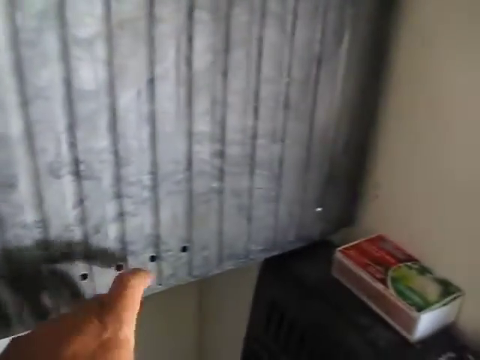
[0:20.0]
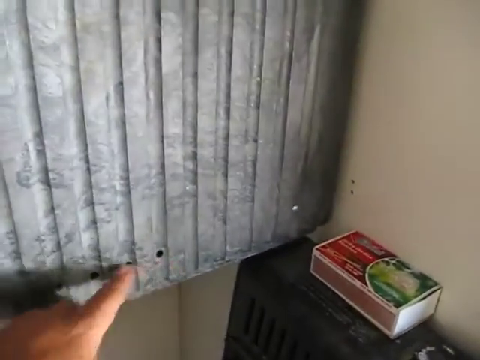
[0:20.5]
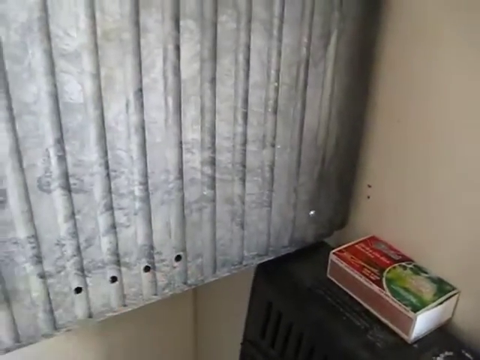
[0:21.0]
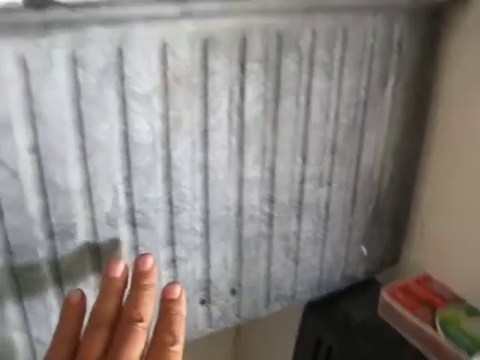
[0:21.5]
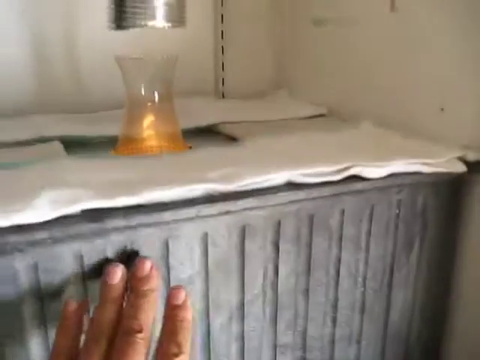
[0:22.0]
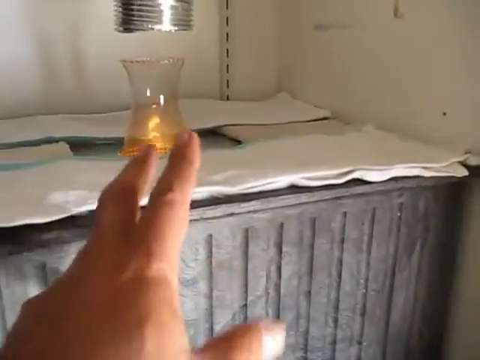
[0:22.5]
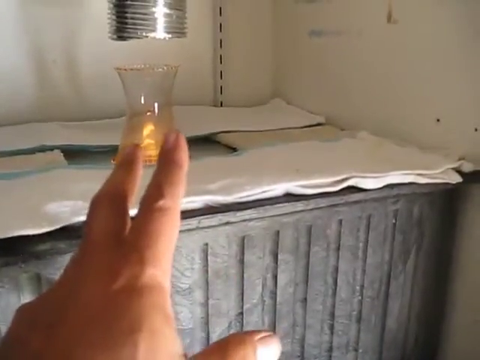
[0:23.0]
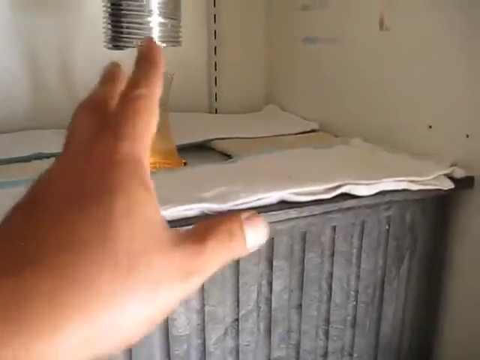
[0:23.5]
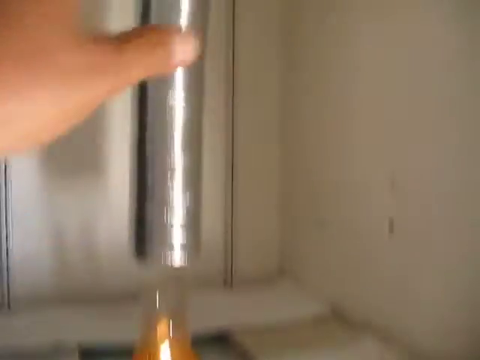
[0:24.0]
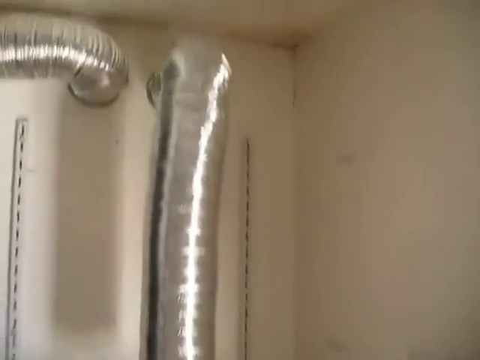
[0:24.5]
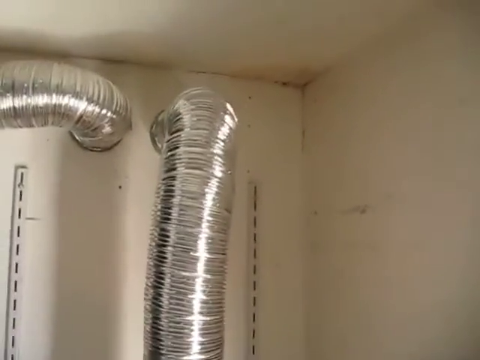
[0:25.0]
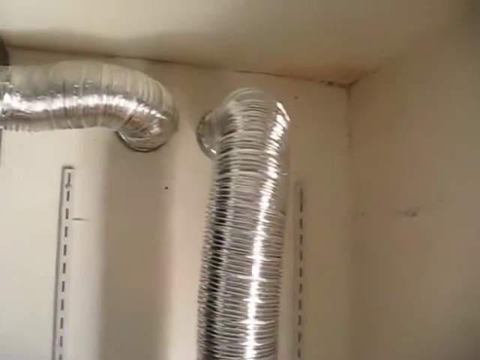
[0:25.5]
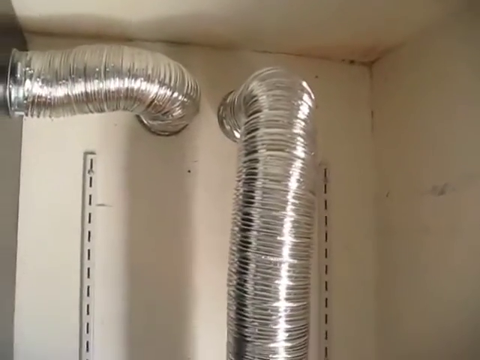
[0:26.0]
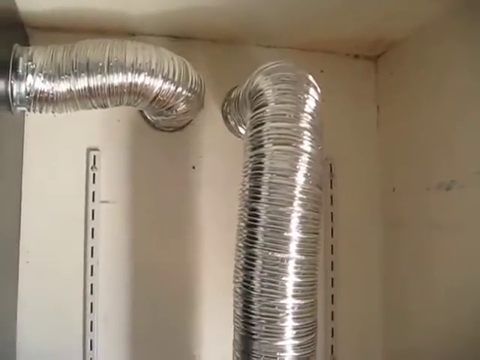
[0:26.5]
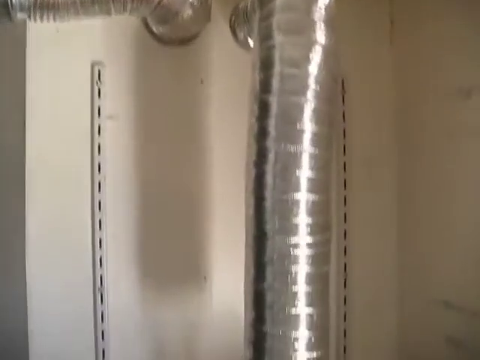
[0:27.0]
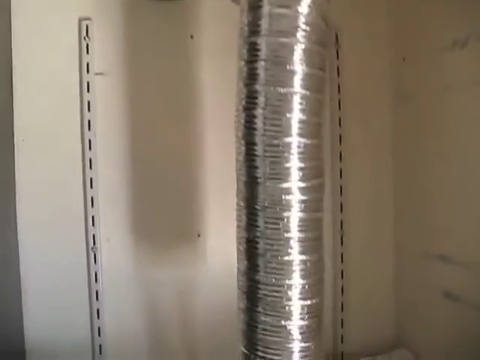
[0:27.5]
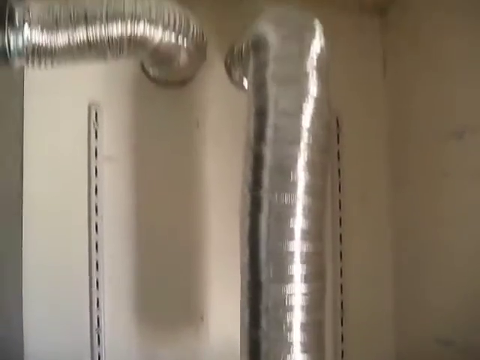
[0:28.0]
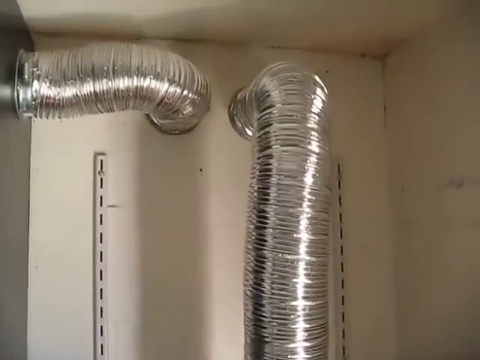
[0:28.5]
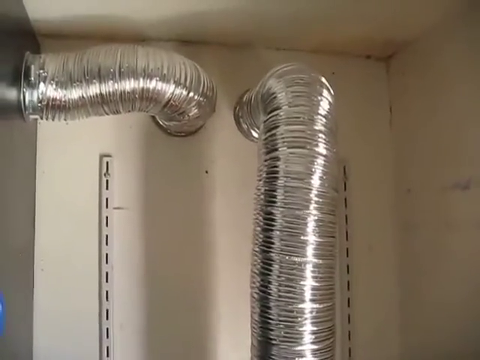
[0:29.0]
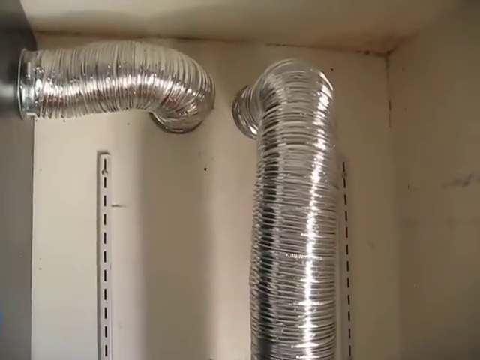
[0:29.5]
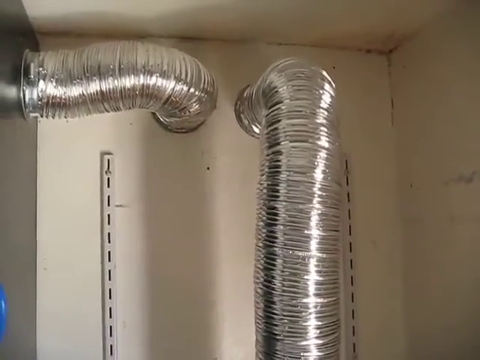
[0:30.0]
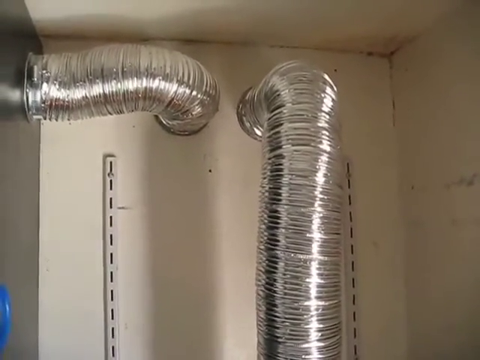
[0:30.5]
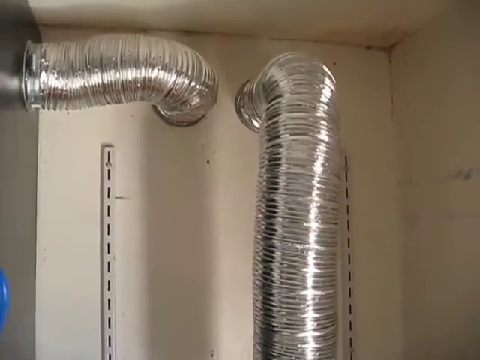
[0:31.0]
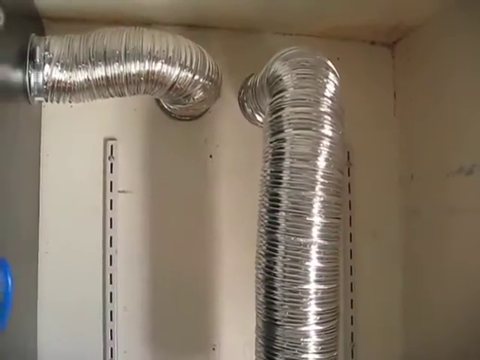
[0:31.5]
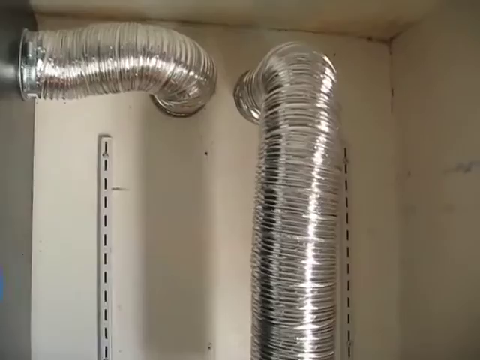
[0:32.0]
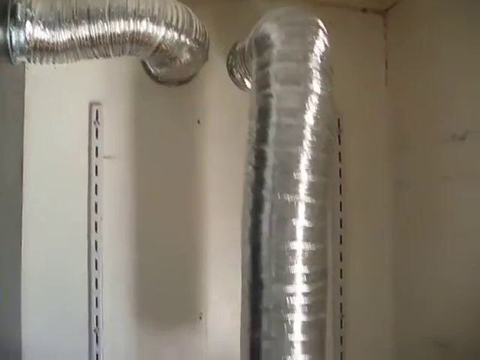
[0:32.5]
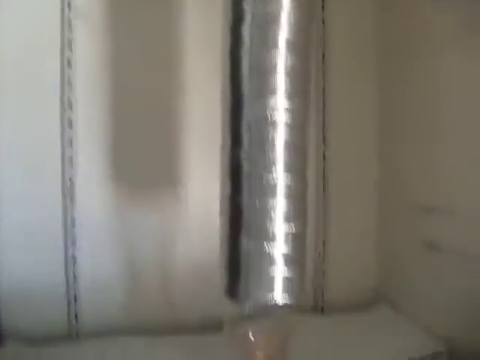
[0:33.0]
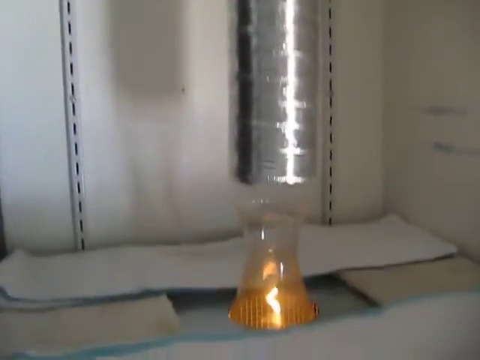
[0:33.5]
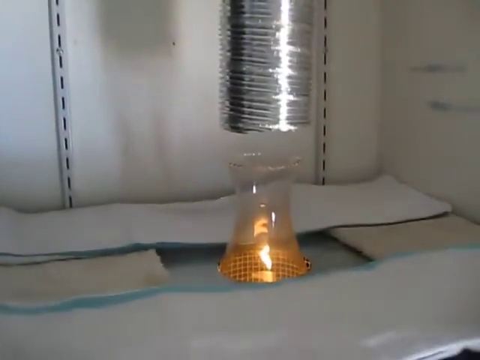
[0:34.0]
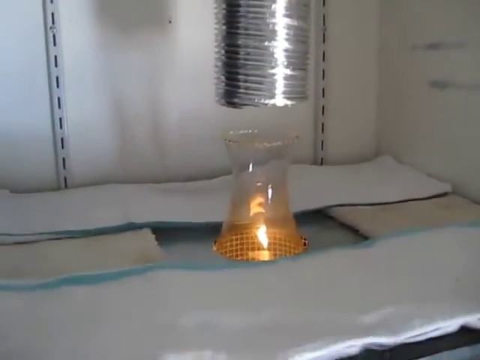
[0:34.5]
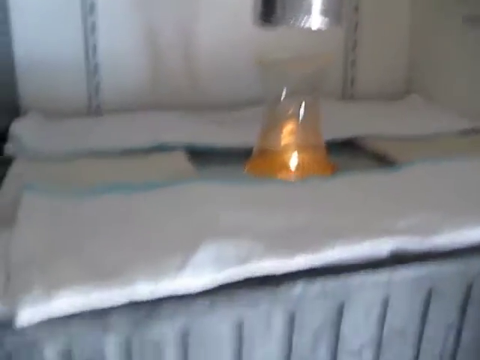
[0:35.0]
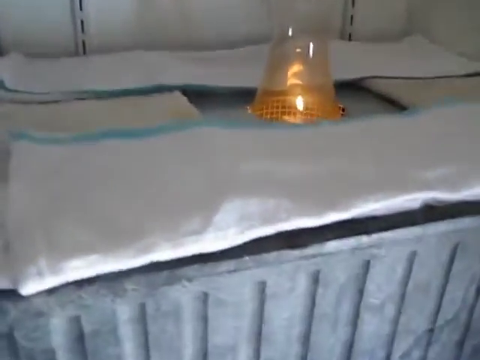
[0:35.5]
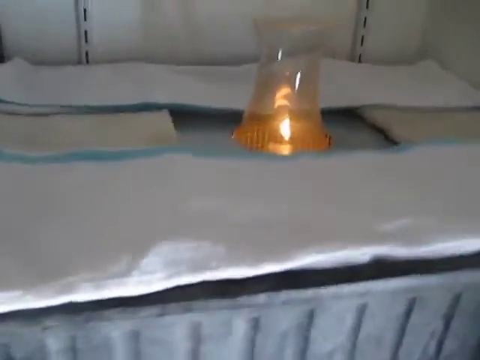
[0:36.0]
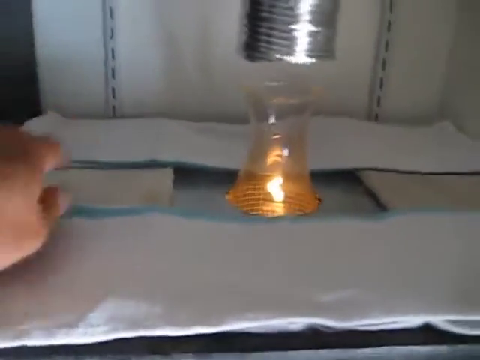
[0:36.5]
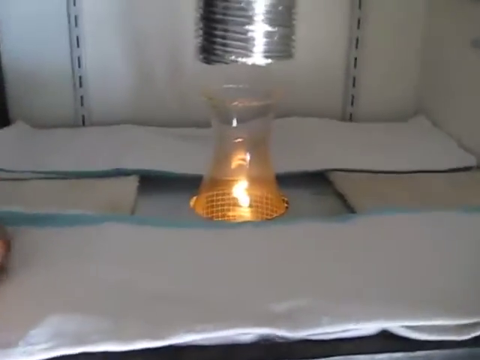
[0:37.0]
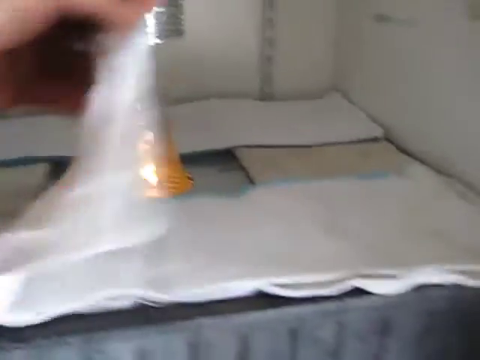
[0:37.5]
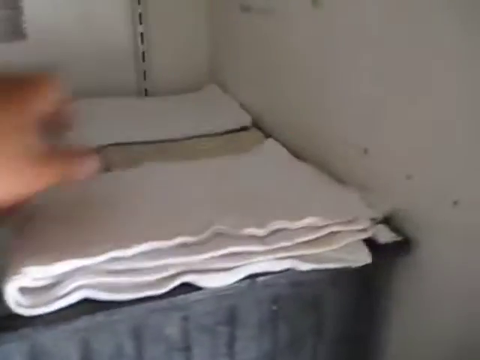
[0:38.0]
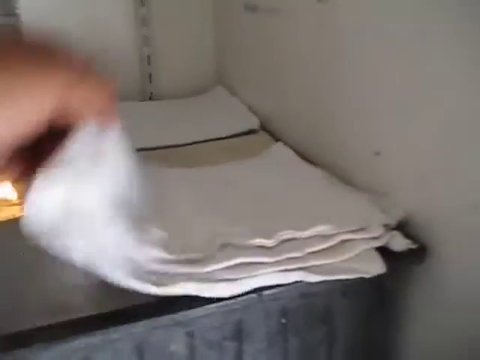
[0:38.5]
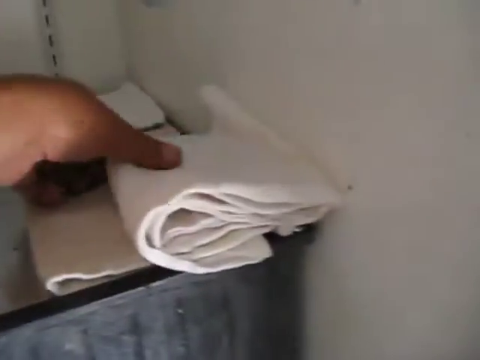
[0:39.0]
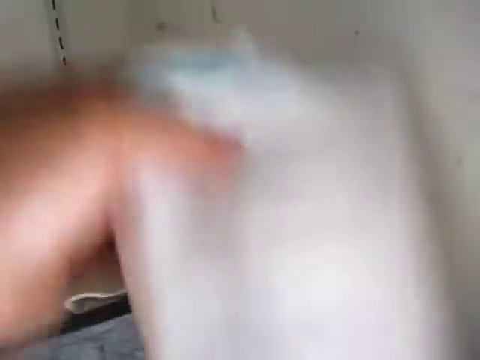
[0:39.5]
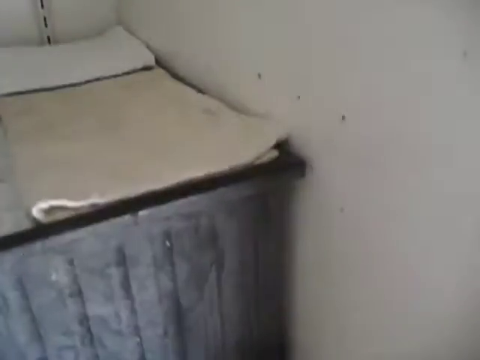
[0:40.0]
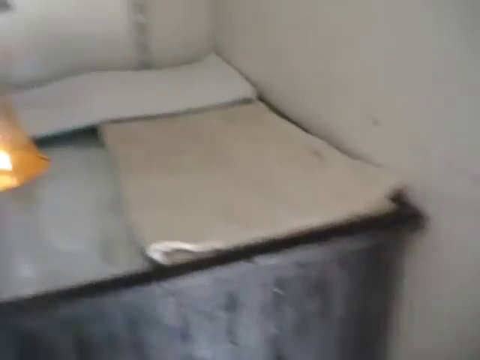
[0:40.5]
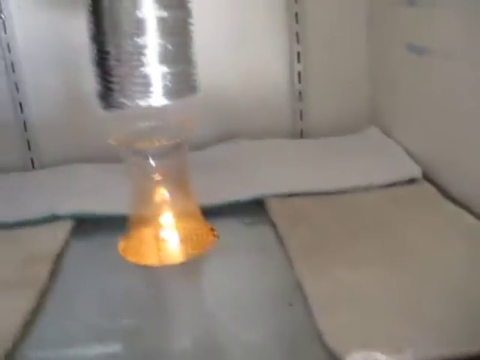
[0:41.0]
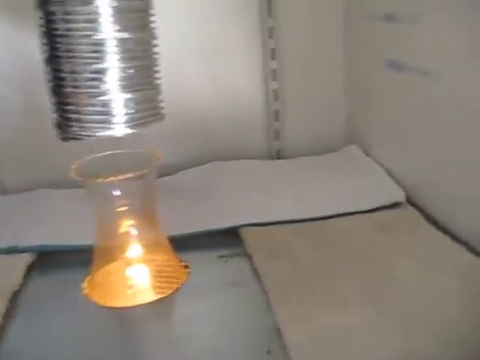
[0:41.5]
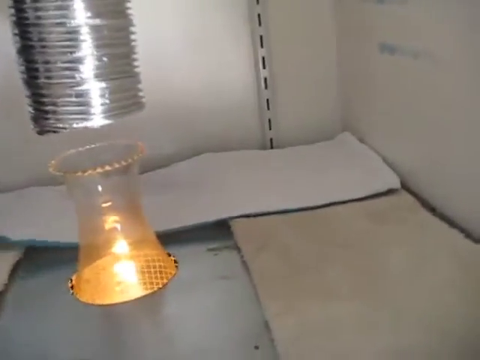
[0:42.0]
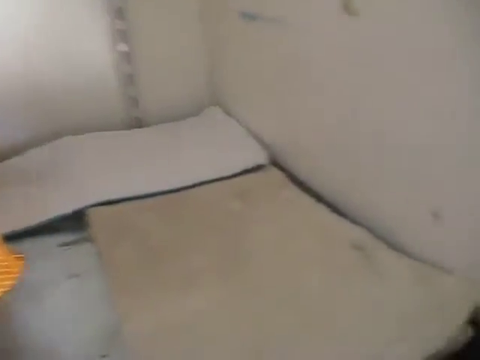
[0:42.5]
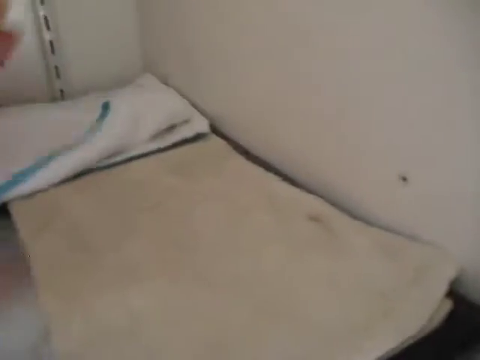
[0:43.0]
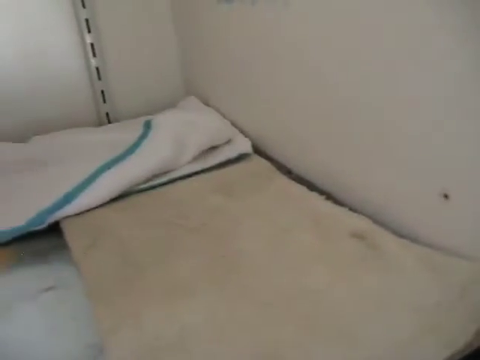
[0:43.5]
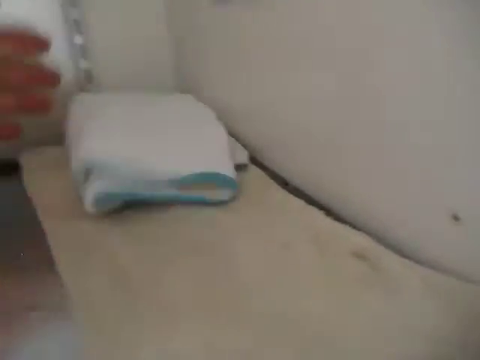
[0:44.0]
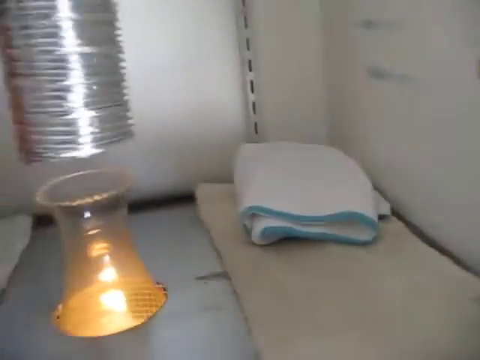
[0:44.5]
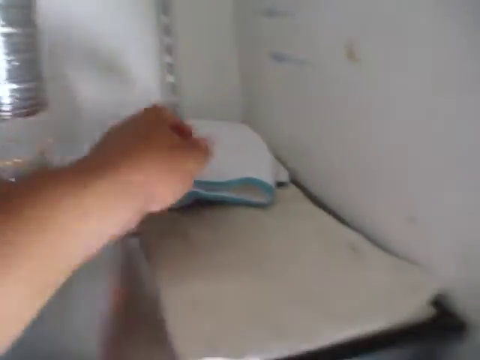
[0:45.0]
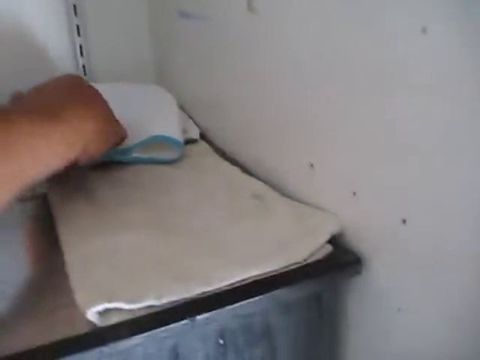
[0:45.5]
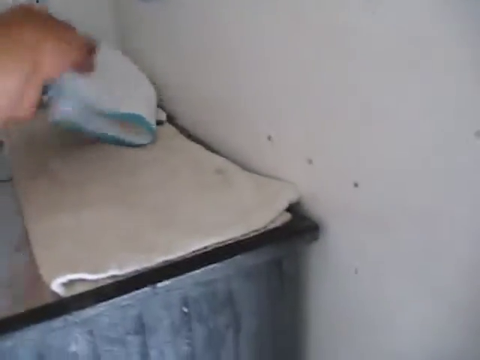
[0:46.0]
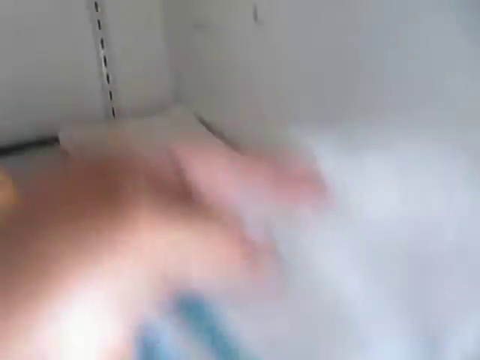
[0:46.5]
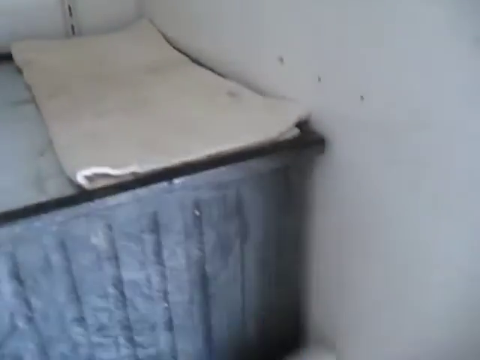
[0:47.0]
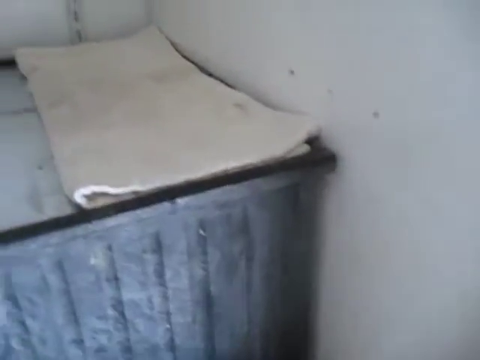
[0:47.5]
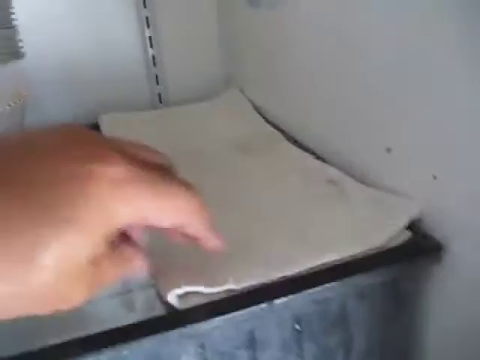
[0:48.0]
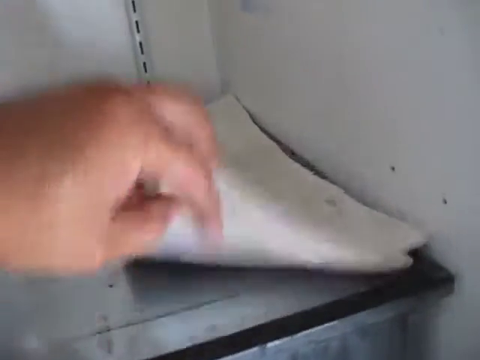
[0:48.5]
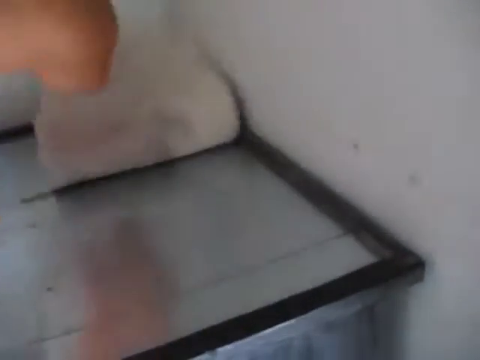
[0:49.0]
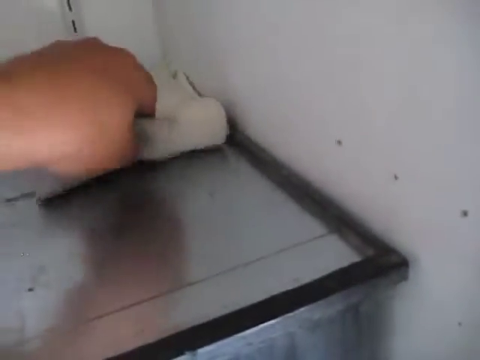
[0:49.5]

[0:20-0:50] The hand continues at the metal part of the product and pokes at its holes. The camera angle then changes, moving upward to give a top view of the place. Thick metallic pipes are connected, one running to the left side and one running down to the lower part. The roof is visible at the top, and then there is a full, zoomed-in view of the material that seems to be expanded within that area. The hand removes the towels from the area; white towels have been covering the corners of the machine.